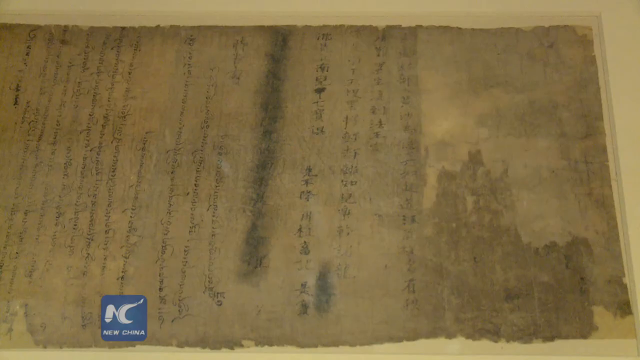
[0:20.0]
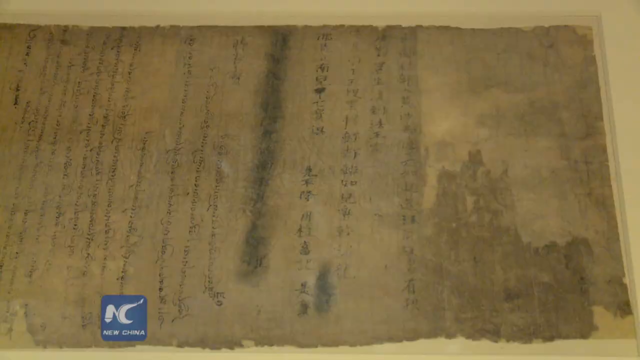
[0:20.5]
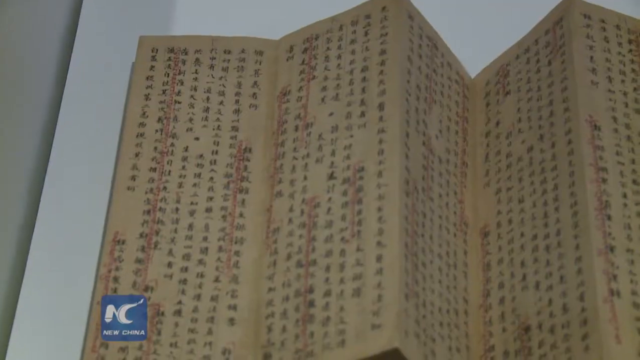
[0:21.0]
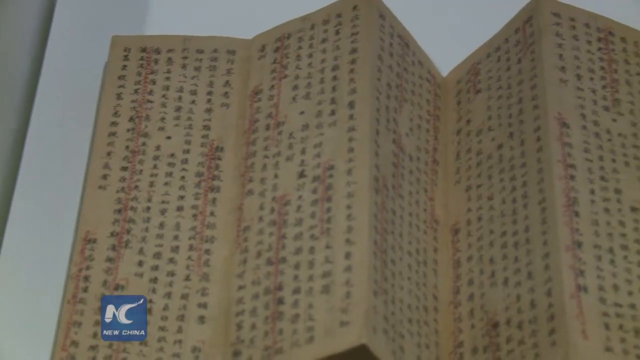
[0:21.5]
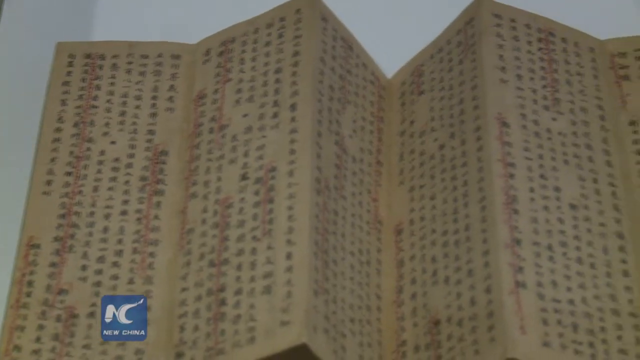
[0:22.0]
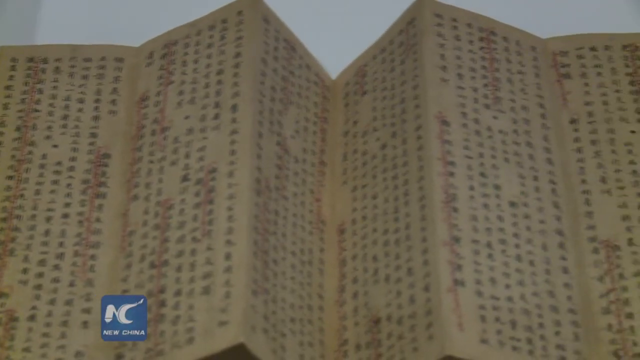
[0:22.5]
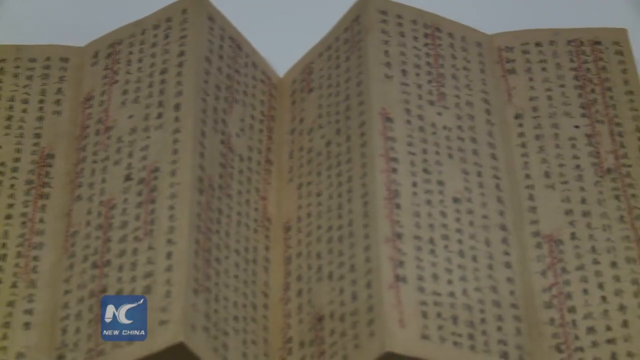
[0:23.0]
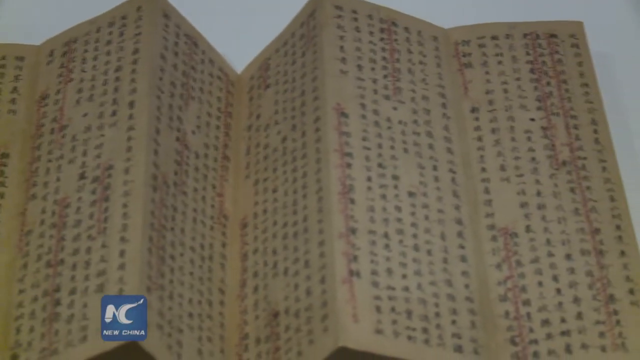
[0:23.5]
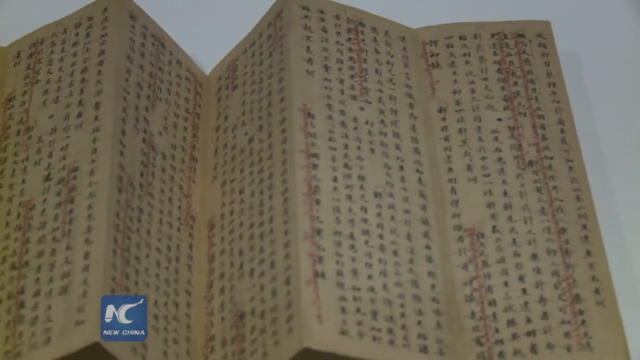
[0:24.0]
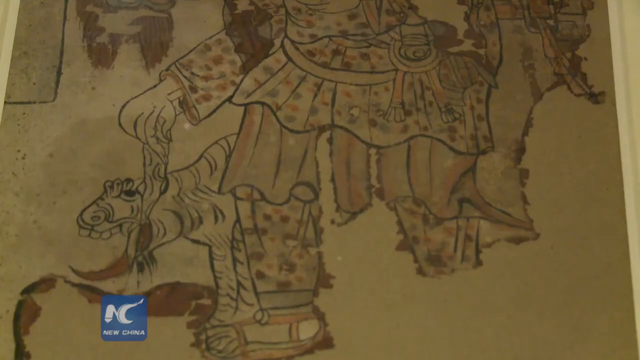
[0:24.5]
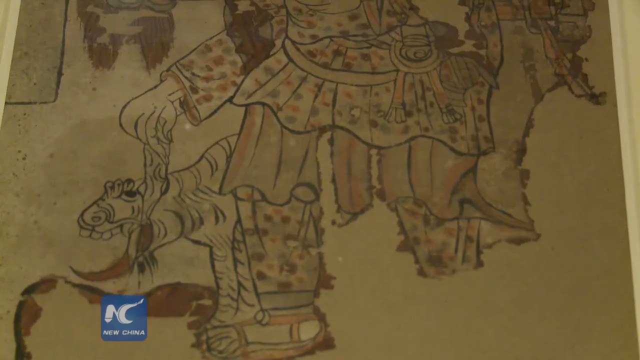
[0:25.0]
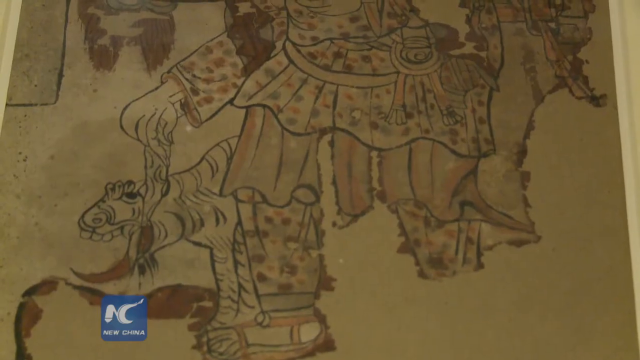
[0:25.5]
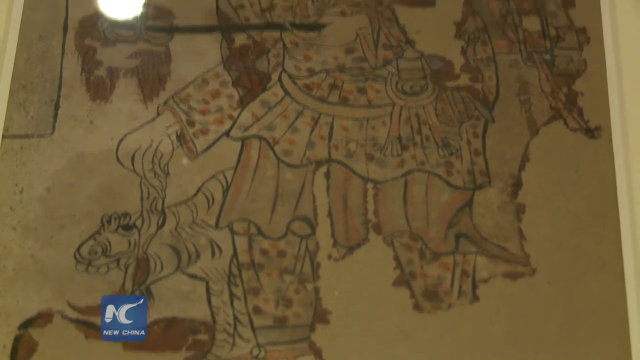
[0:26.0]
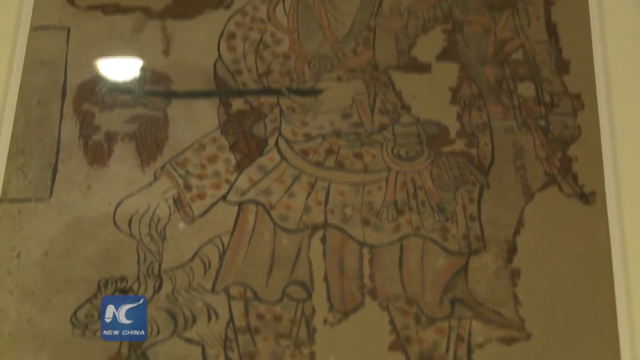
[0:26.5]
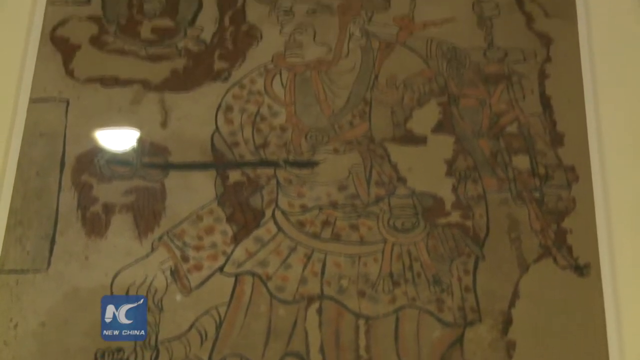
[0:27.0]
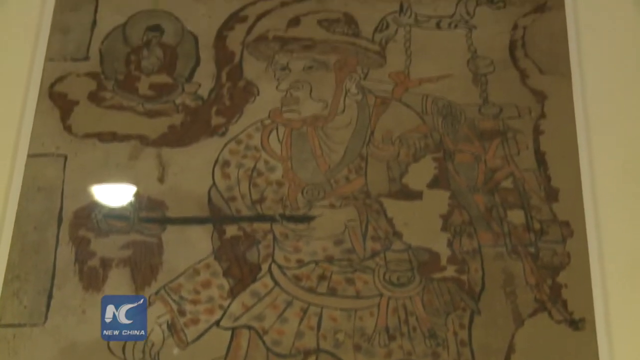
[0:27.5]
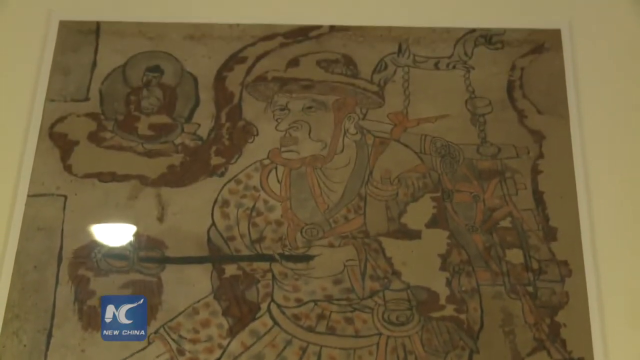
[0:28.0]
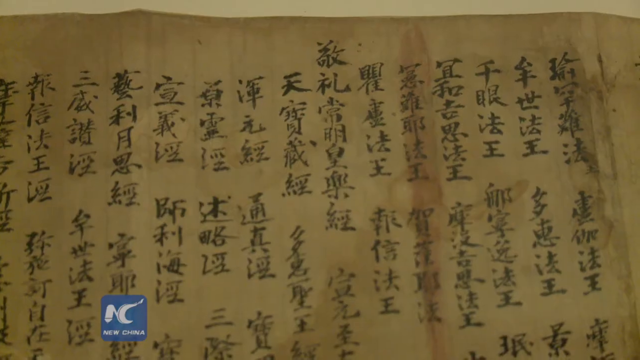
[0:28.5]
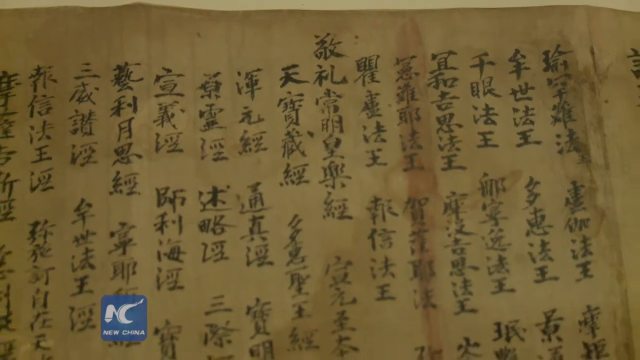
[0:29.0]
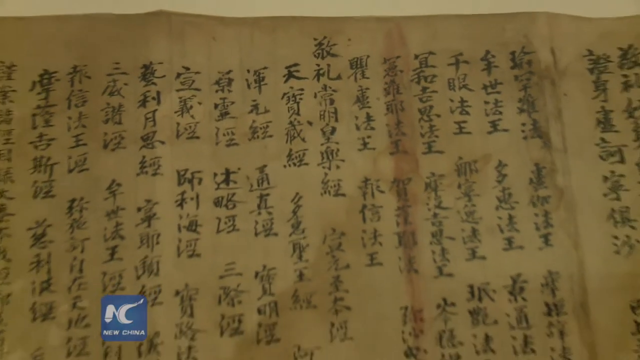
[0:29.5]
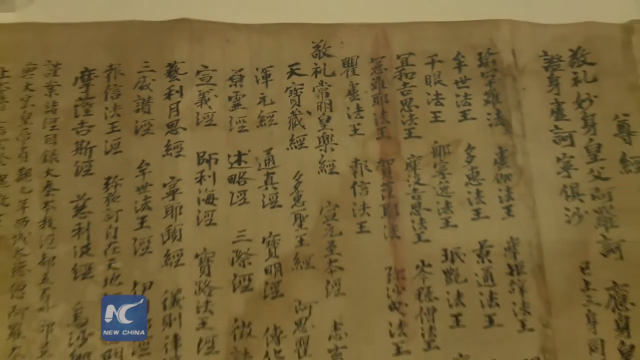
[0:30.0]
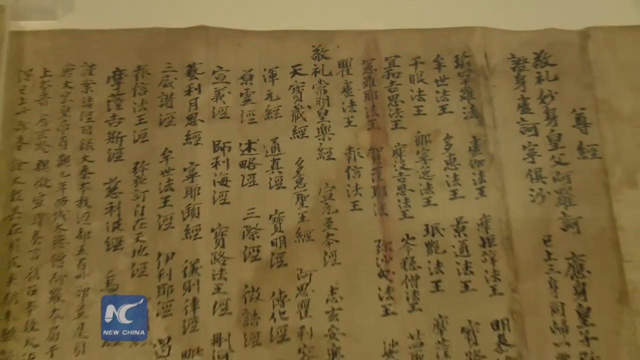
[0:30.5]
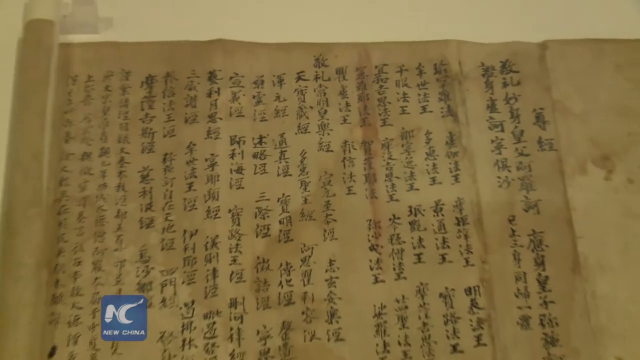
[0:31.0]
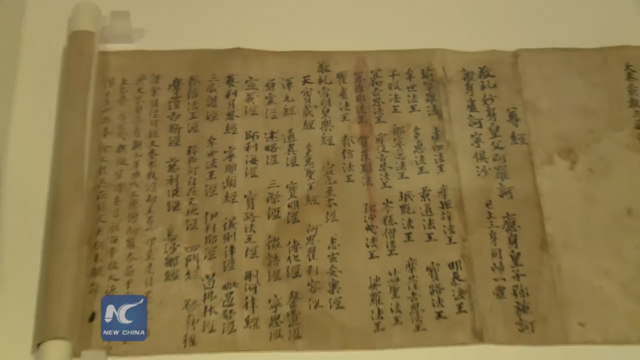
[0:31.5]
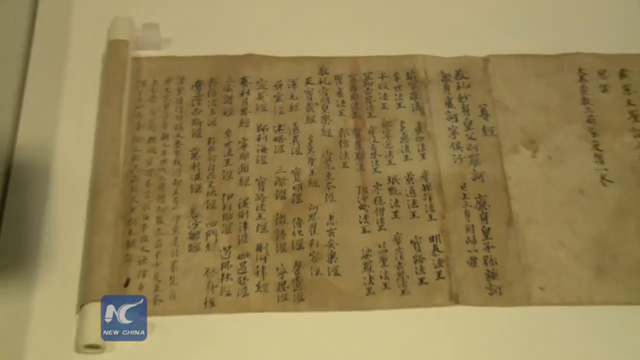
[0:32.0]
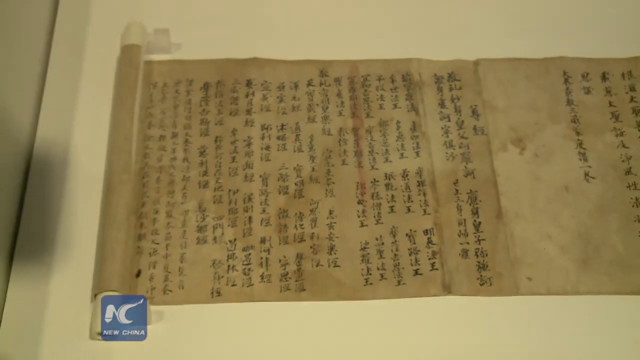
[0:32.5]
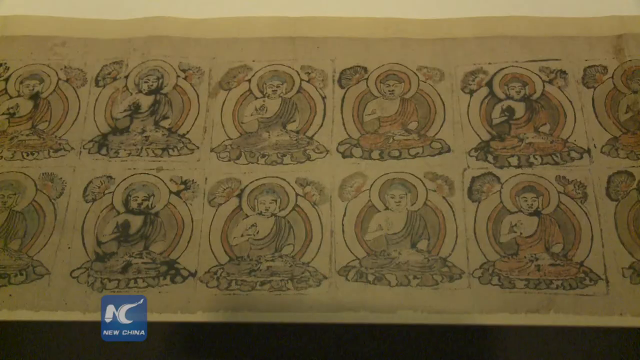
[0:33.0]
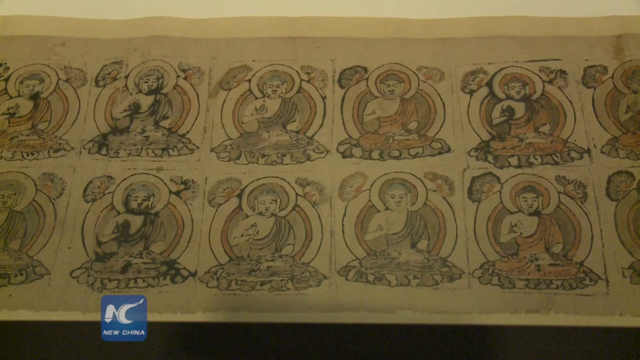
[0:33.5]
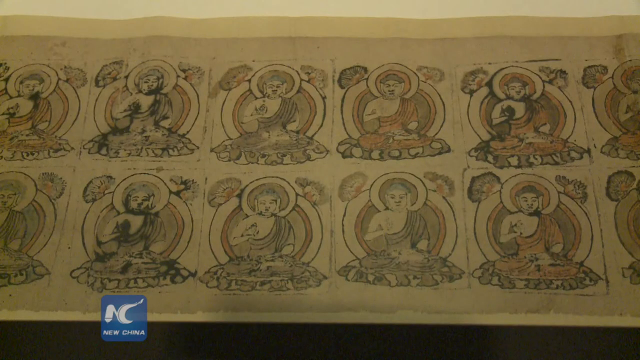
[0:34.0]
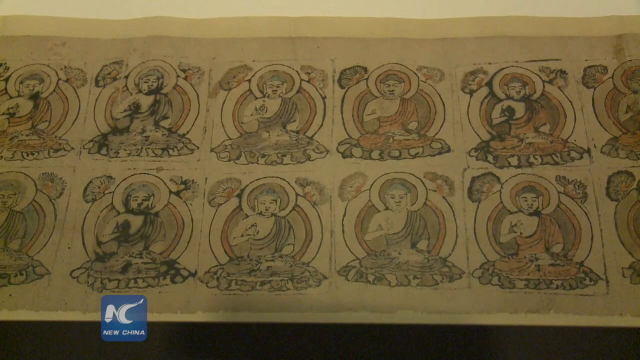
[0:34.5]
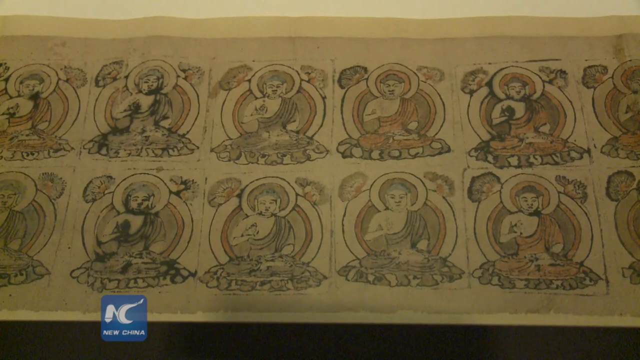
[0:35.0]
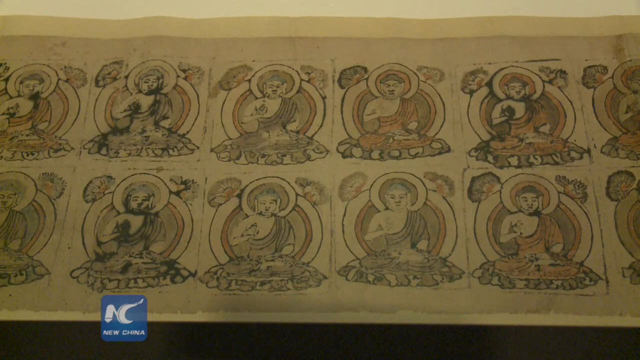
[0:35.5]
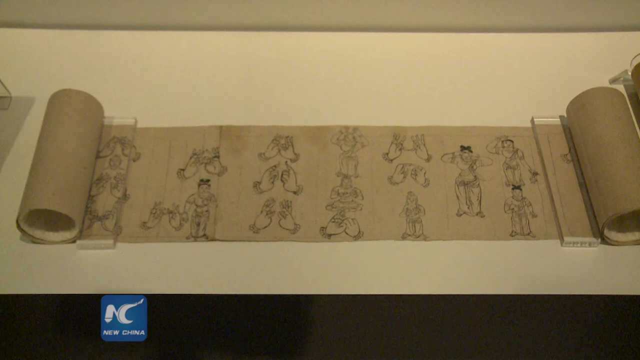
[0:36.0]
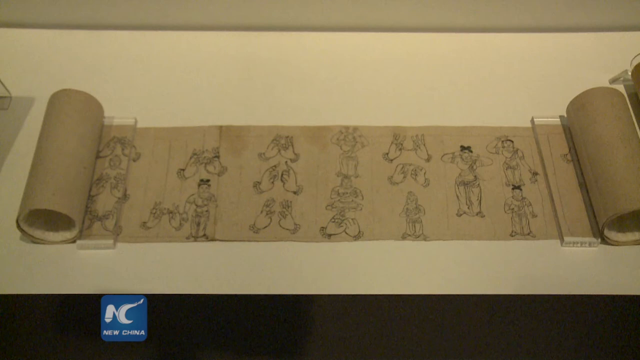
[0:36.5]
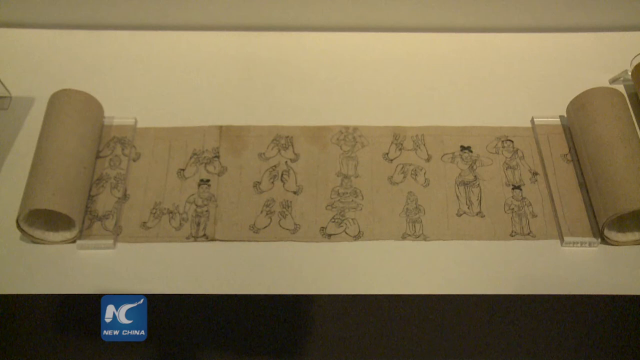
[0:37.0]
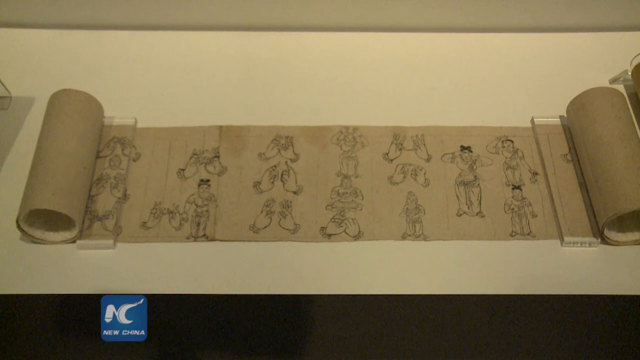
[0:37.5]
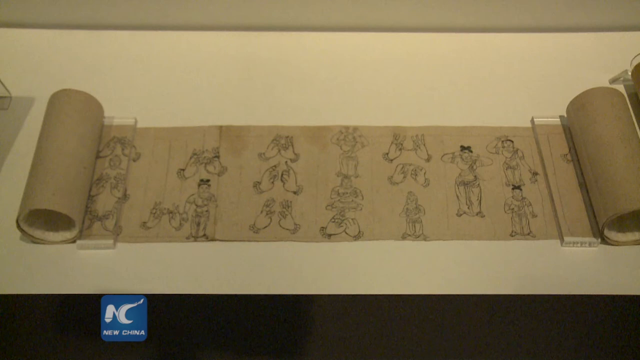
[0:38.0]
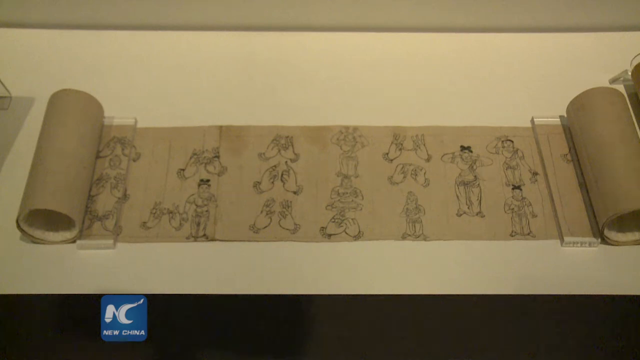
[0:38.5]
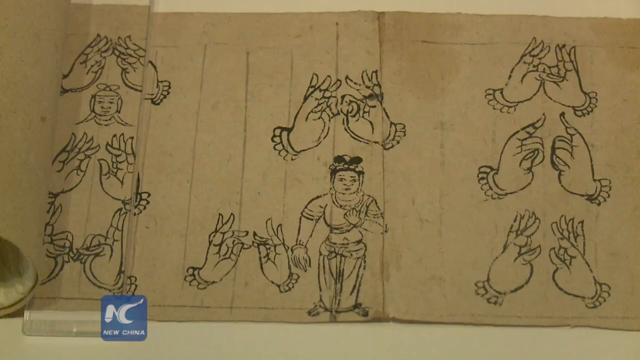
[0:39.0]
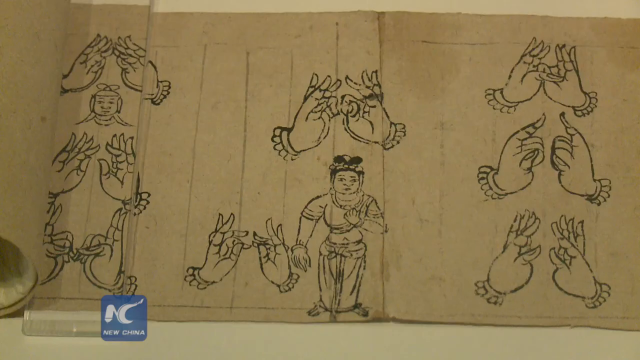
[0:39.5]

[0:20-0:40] A very old scroll or scripture is shown, almost completely faded out, its text very brown and faded. The view moves to a different type of pamphlet or booklet, then to a piece of art covered in glass for preservation, which looks like it depicts a military soldier. More preserved scriptures, books and written works follow. A page of designs appears to depict the same person in very different styles. Next is another scroll showing what look like different hand signals, perhaps describing types of languages or how to pronounce certain things; it appears to be an educational scroll.